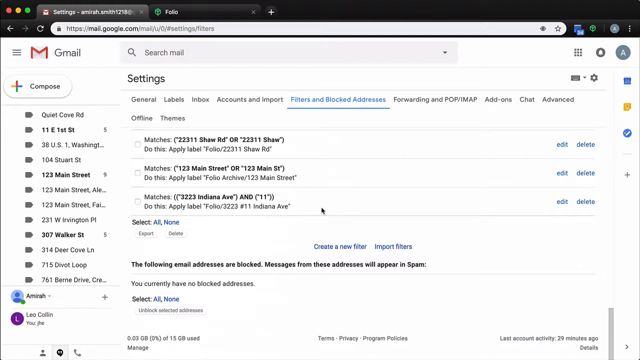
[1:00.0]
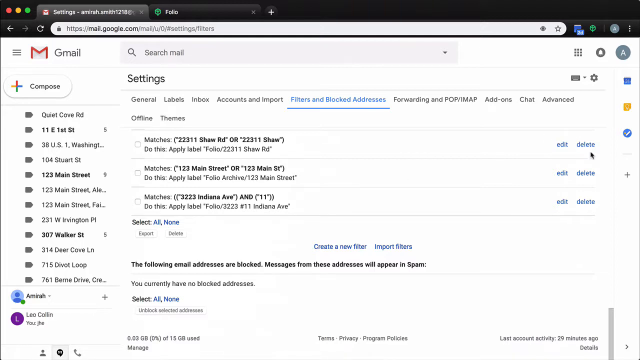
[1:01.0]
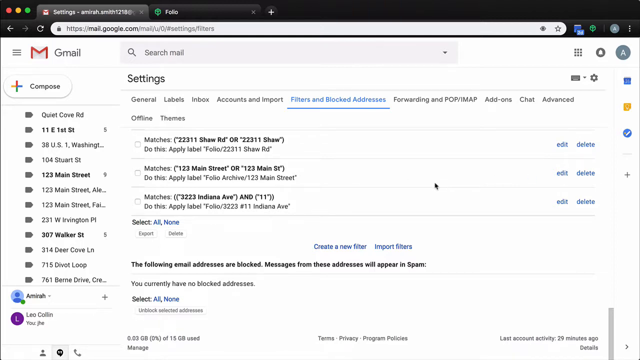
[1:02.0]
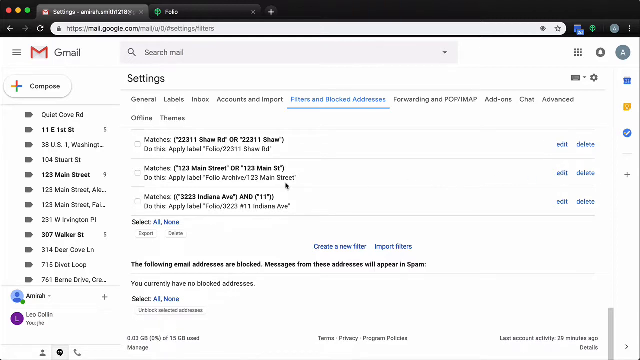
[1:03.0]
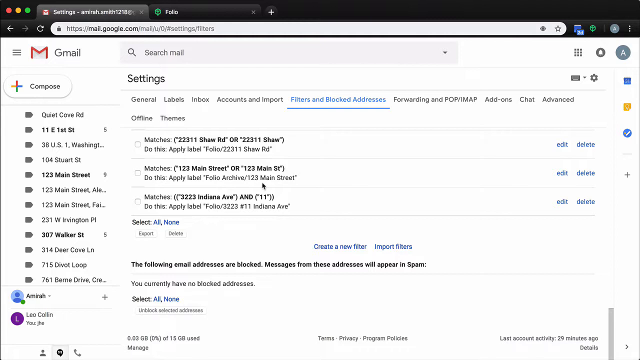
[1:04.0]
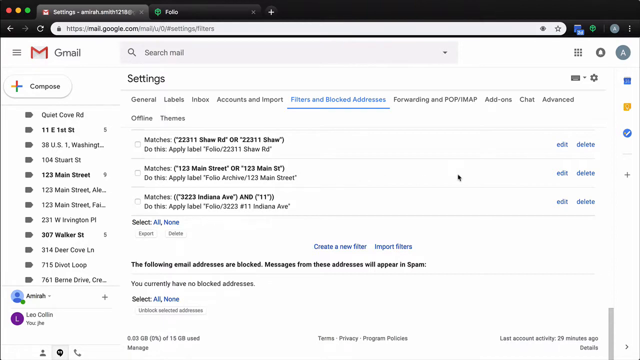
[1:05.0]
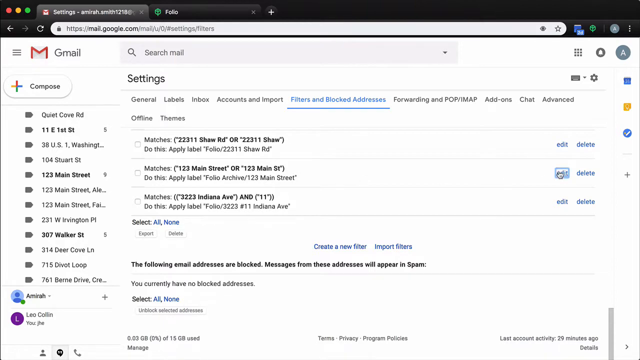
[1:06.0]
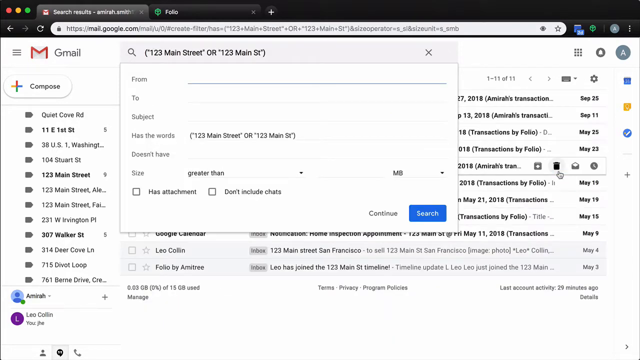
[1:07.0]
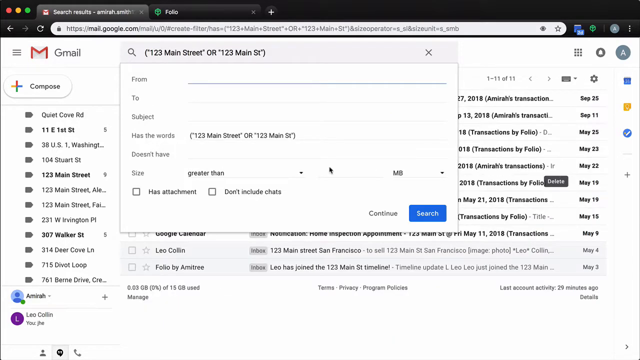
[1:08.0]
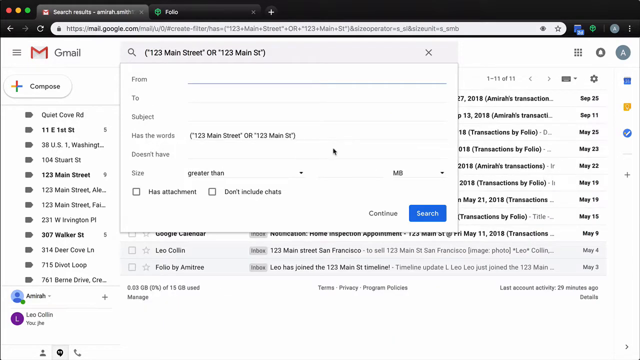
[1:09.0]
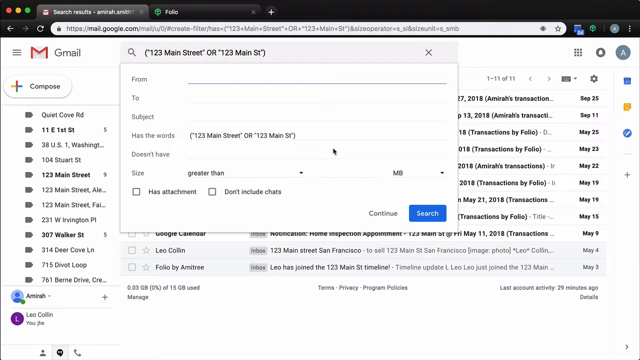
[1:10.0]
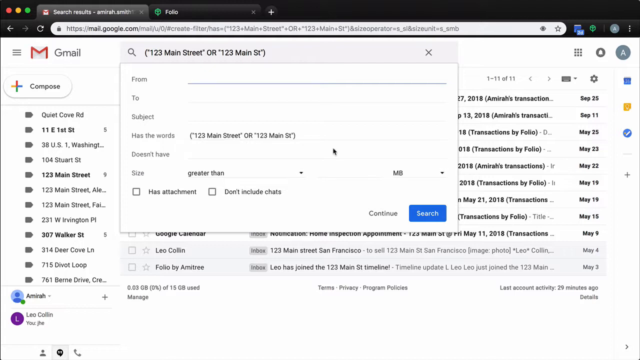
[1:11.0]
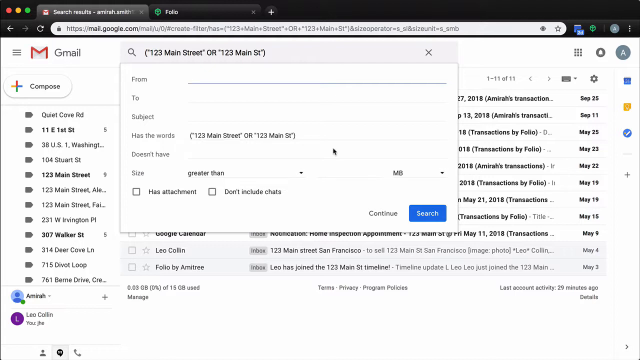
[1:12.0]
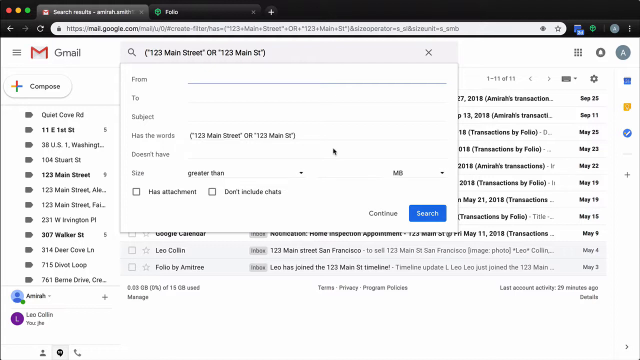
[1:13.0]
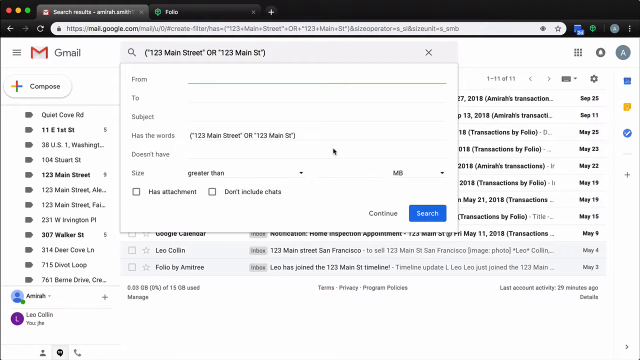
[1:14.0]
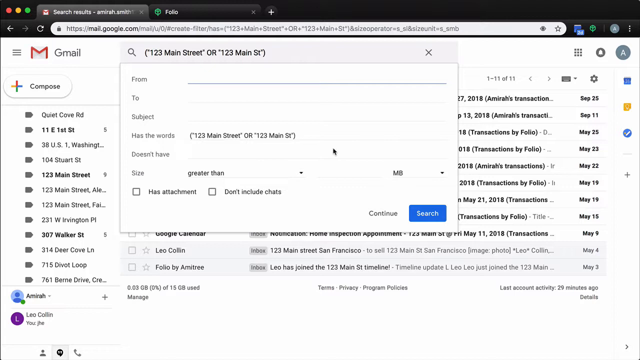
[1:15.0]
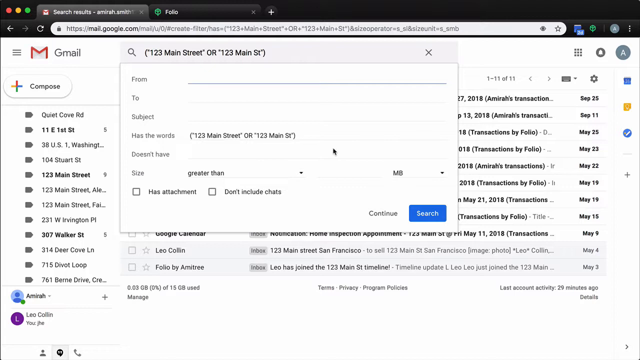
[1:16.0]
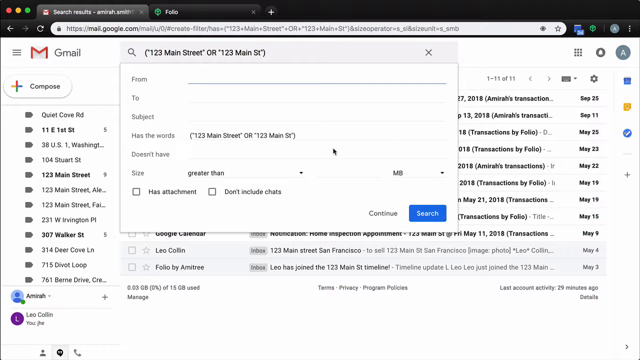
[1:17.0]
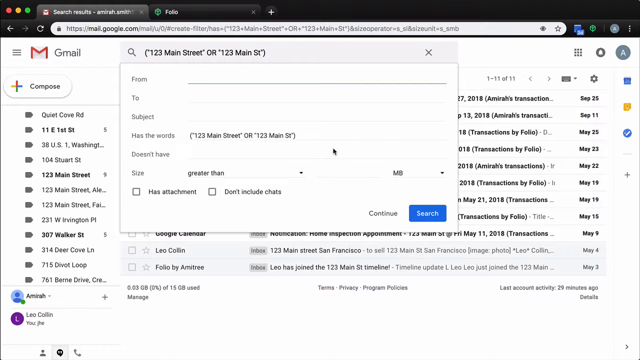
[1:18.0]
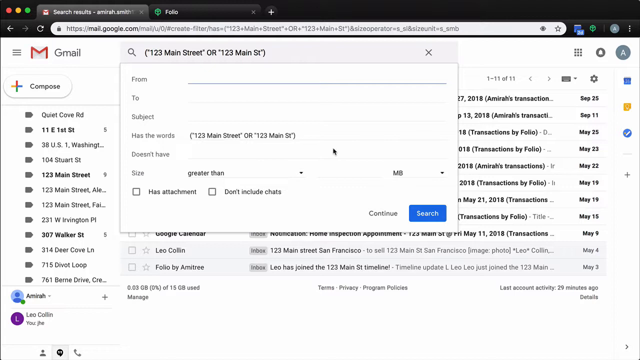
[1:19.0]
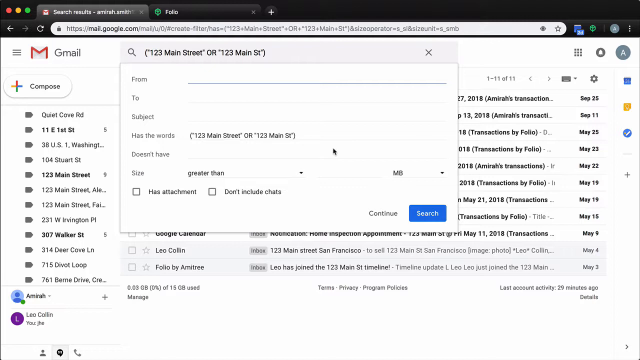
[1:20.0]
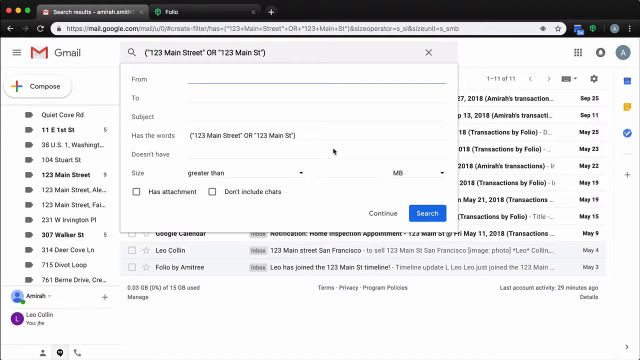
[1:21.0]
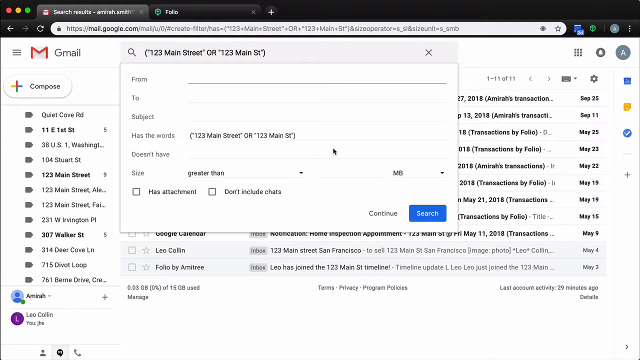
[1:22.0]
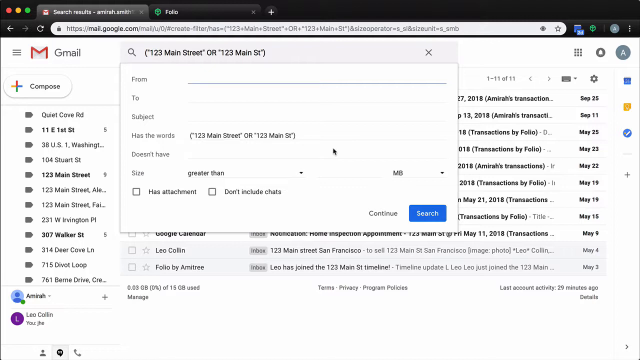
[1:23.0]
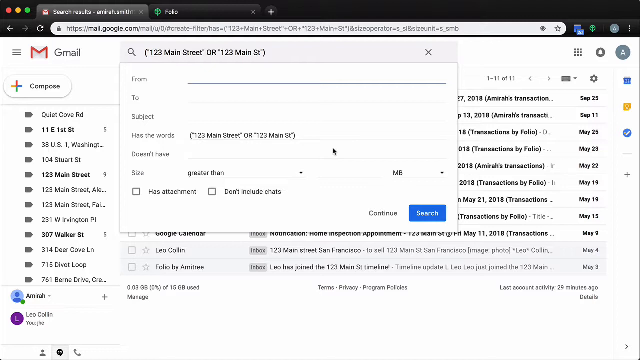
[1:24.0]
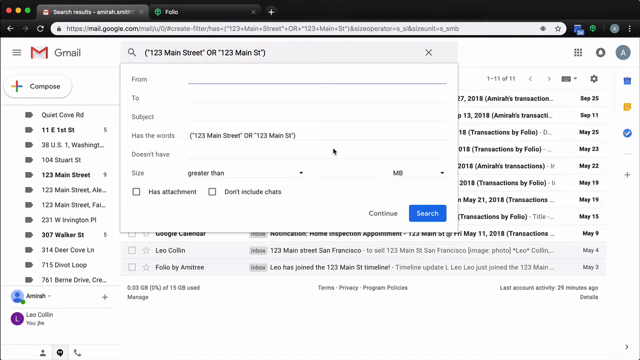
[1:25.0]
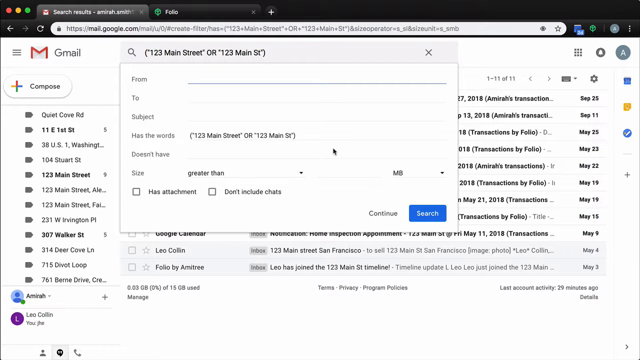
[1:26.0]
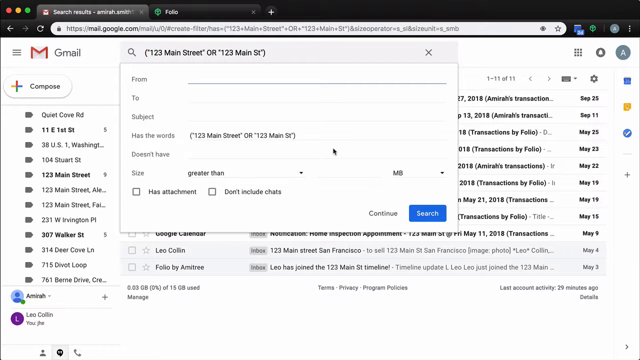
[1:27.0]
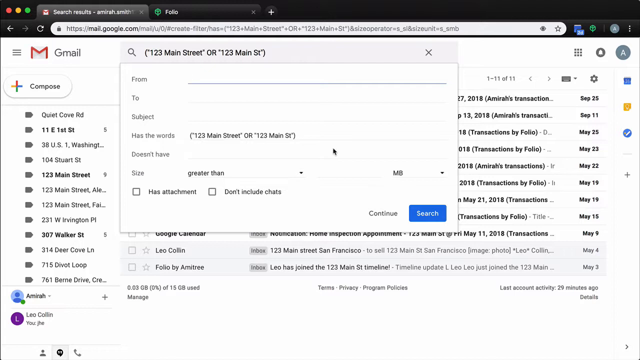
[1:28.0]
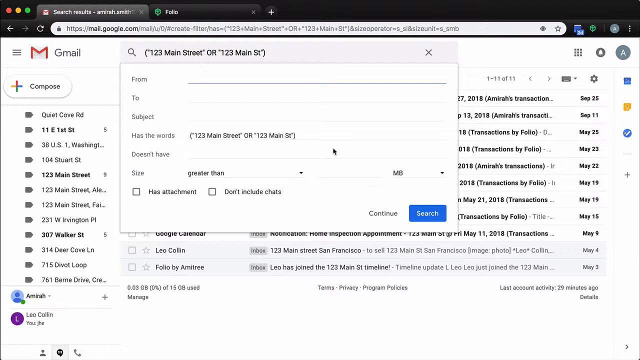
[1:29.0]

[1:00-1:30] The user hovers over the filters and clicks edit on one of them. A pop-up appears whose search section says "123 Main Street or 123 Main ST". Underneath are the from and to options, then subject, then the has the words field reading "123 Main Street or 123 Main St". The doesn't have field is empty. Below is the size setting with two options, greater than or less than, and on the right side the unit in megabytes. Underneath are two checkboxes: "has attachment" and "don't include chats".